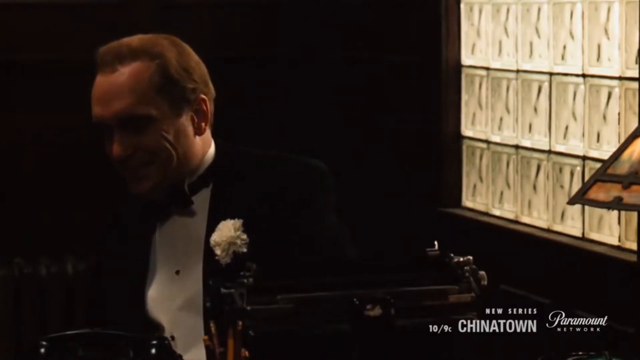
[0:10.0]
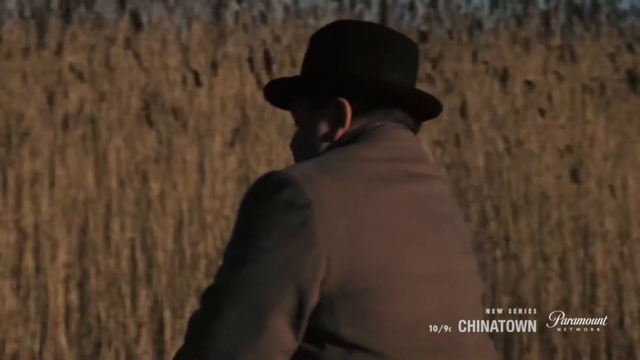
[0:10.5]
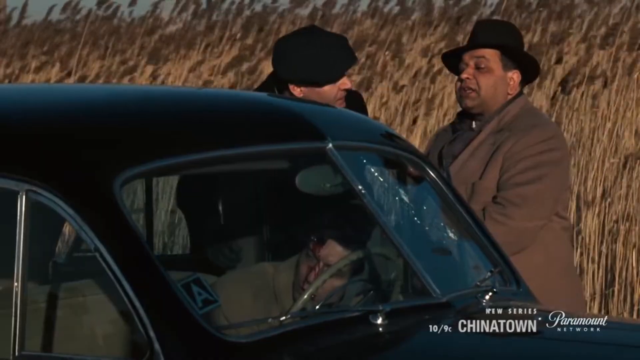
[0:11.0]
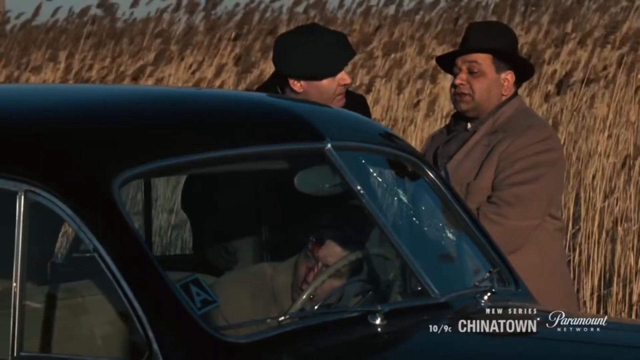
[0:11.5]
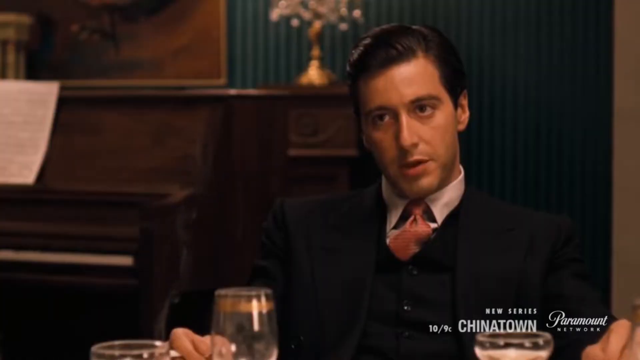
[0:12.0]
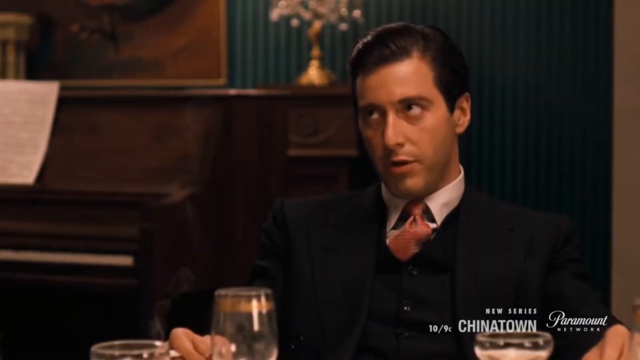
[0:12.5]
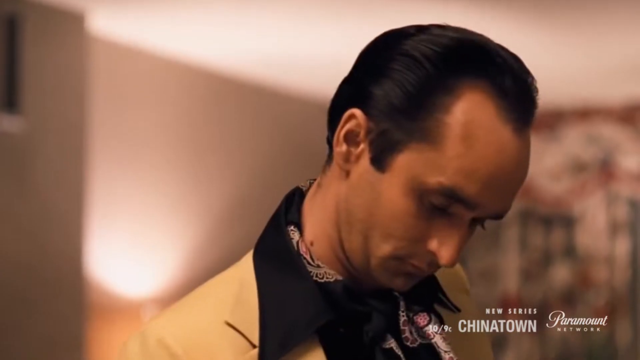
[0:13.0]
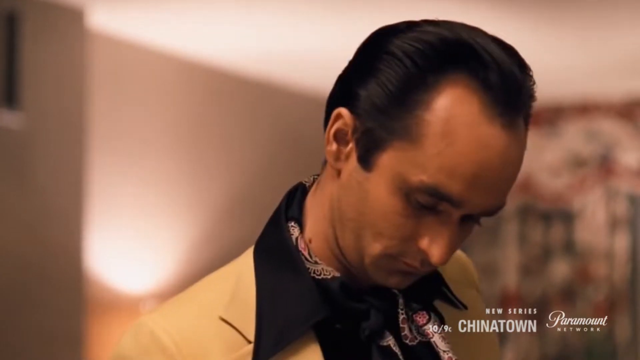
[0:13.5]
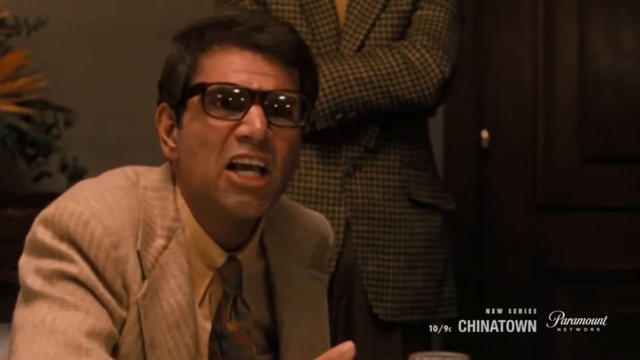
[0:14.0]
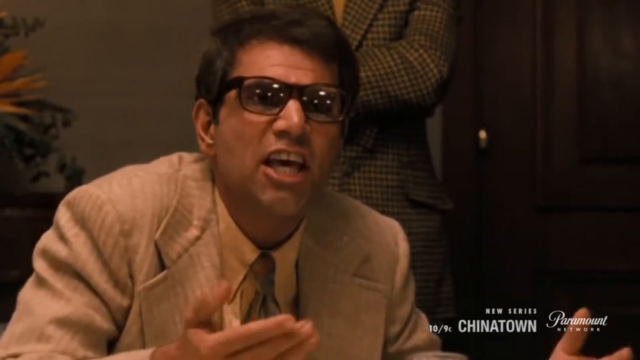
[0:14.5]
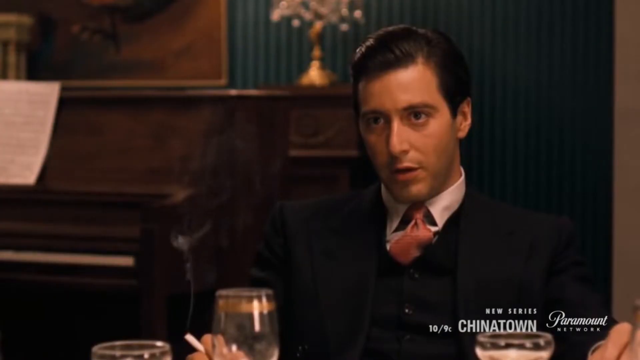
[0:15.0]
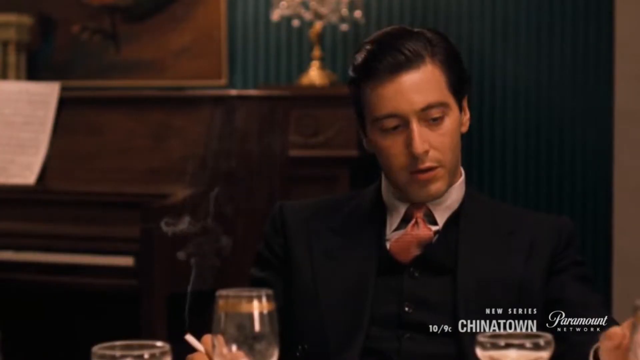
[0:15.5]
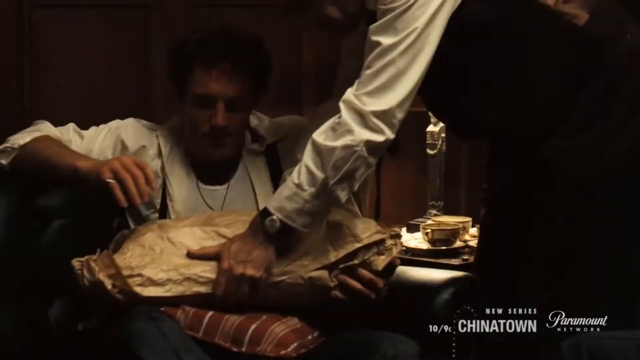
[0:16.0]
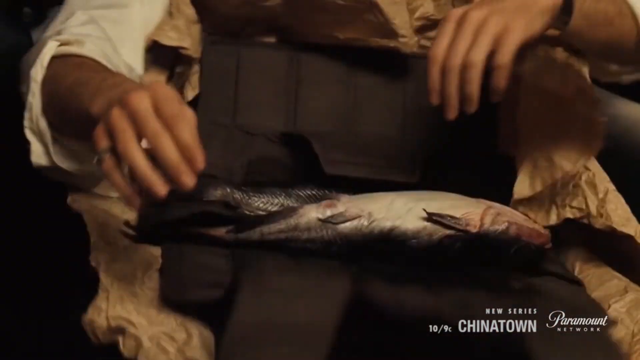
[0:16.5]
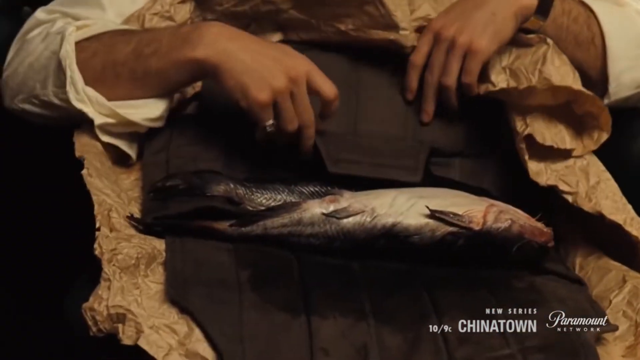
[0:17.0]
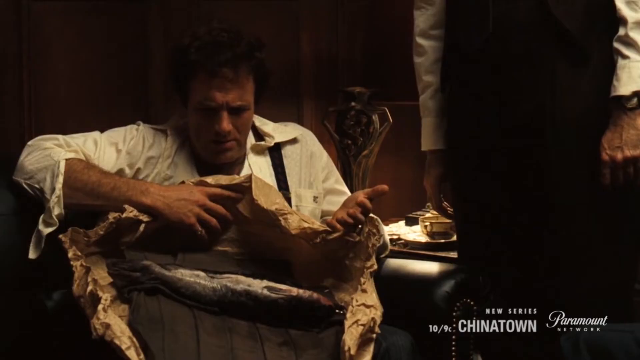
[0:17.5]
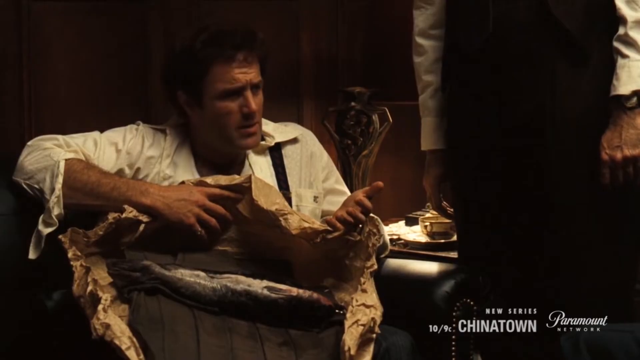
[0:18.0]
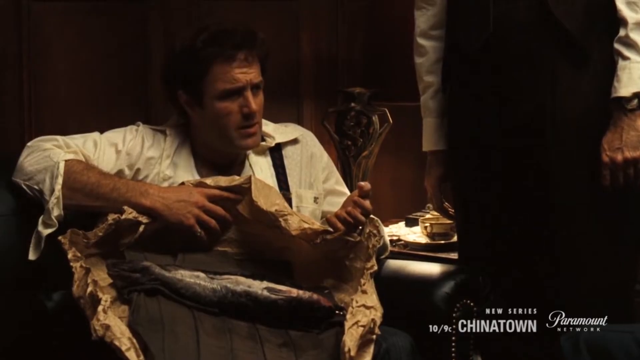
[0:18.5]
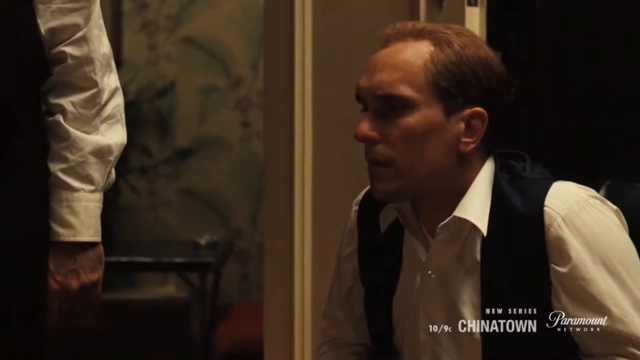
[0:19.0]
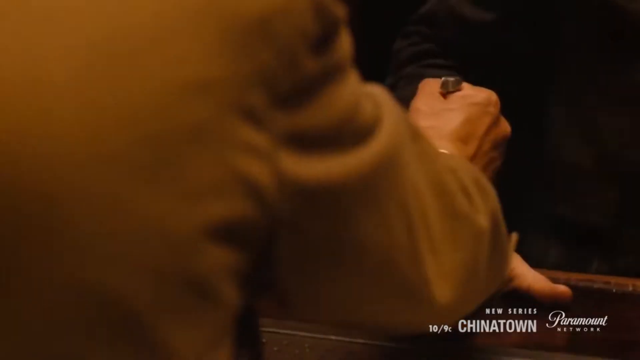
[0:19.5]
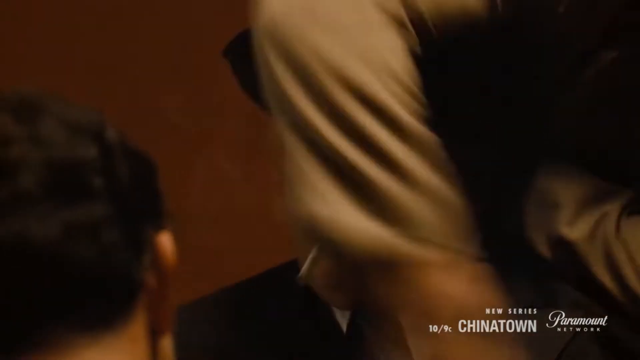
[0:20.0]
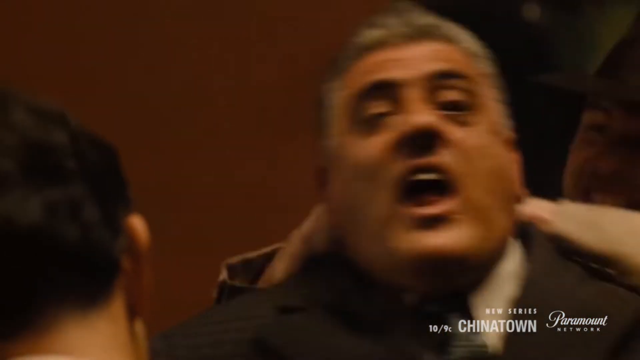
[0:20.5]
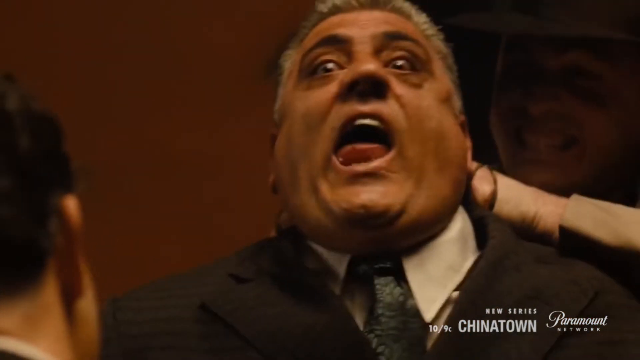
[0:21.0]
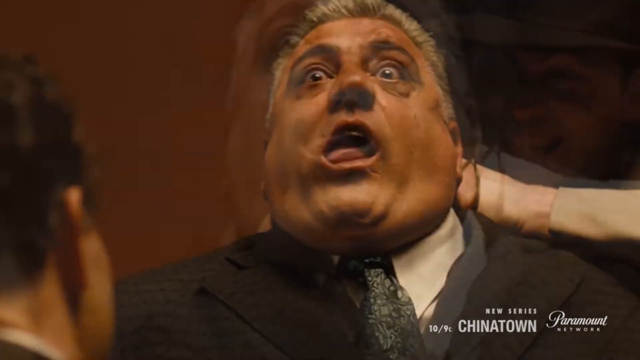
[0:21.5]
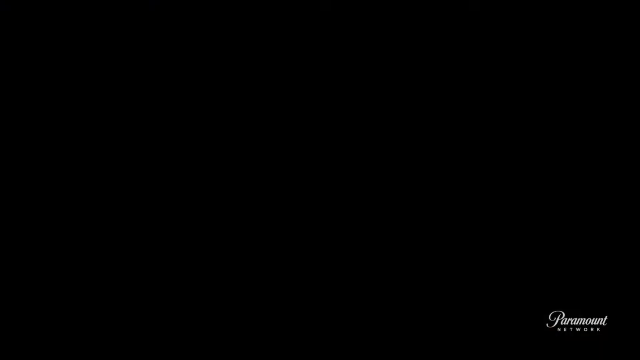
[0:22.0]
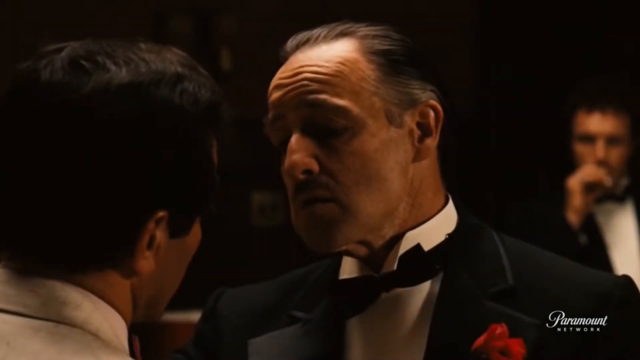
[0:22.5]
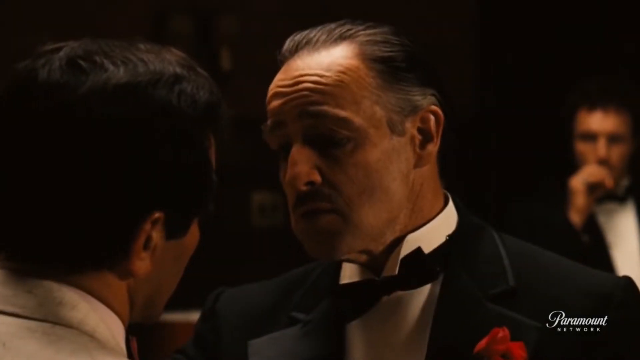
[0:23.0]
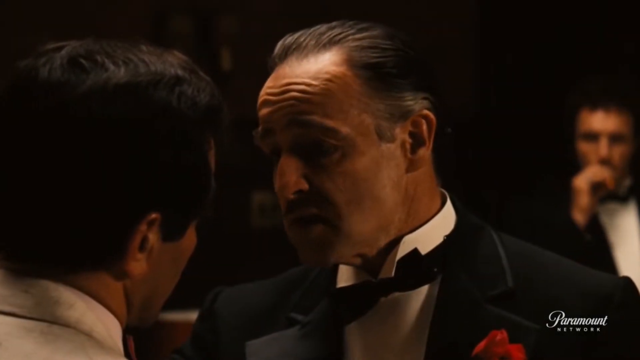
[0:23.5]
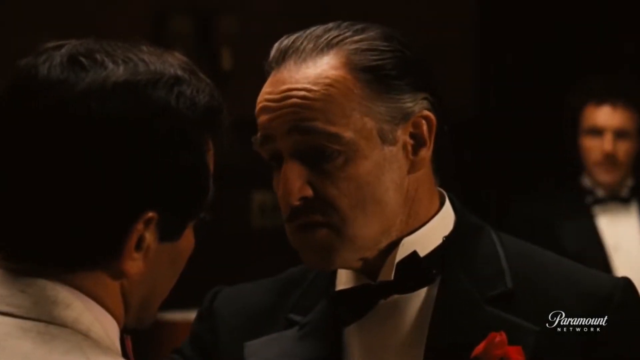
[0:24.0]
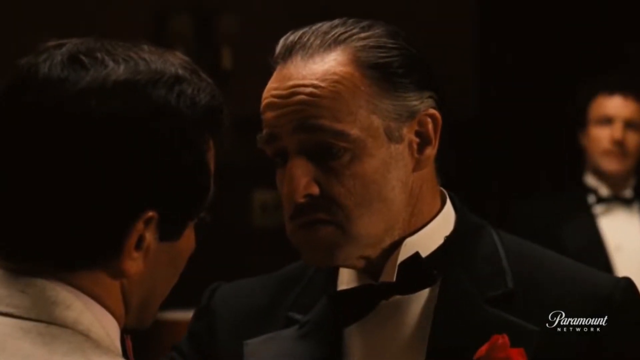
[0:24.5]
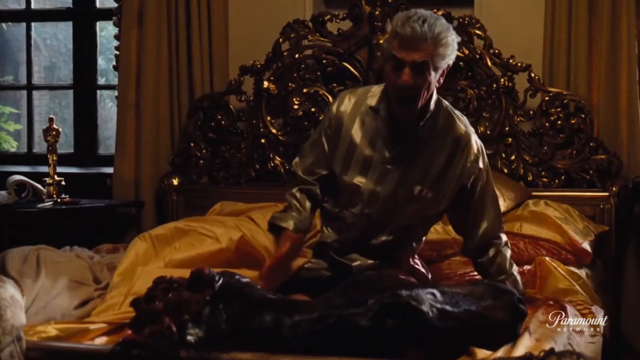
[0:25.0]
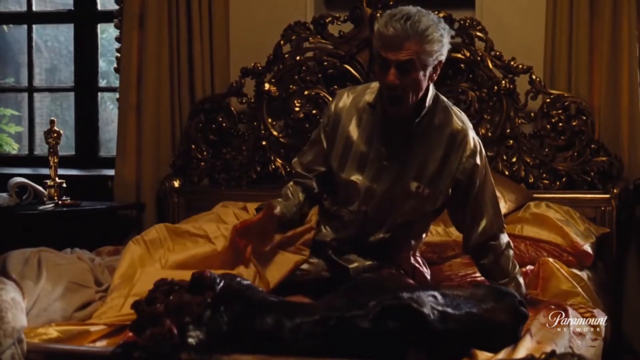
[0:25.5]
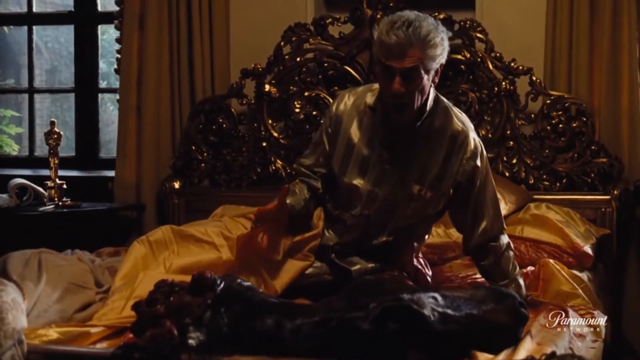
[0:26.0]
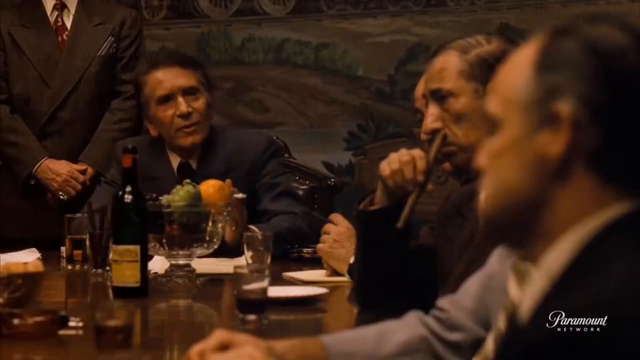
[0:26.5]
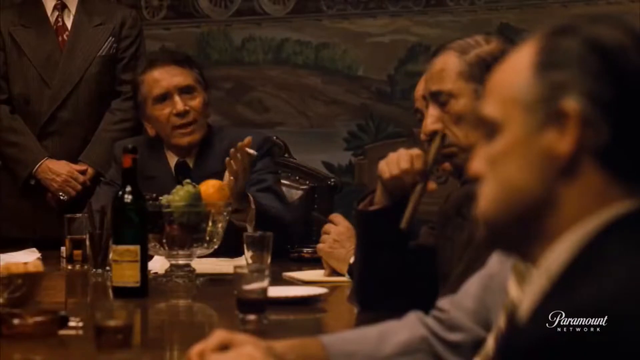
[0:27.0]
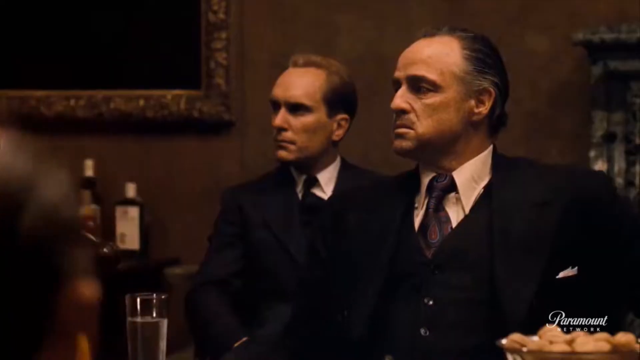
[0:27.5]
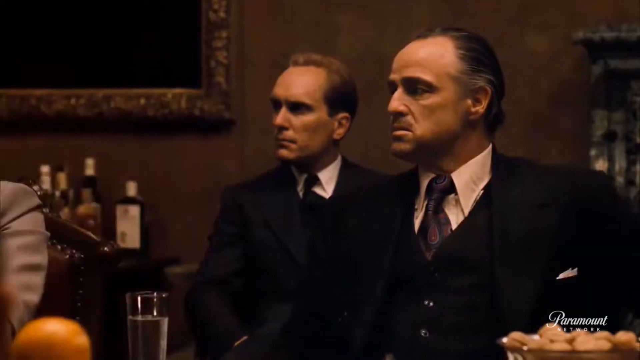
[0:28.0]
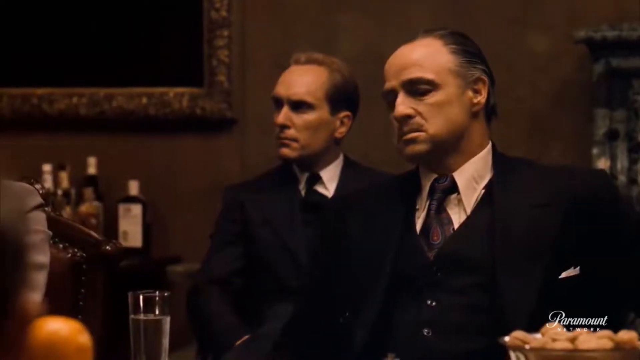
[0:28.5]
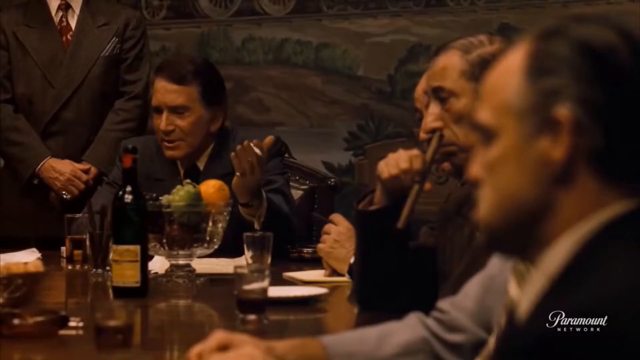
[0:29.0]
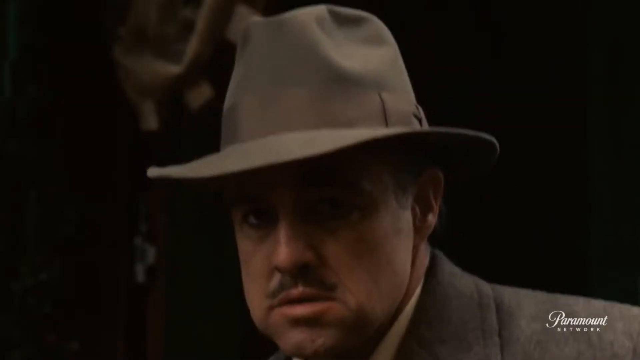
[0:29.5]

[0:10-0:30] The name "Chinatown, new series" appears at the bottom right. A man in a suit smiles inside a house, with some lit bulbs in the background. The scene moves to a field, where a man in a hat and trench coat and another man with a cape, also in a black trench coat, open the door of a person who looks like he has been shot in the head; the windscreen is cracked. In another scene a man in a suit talks, with a piano behind him and a flower on top of the piano; the man smokes and has a glass of wine. Two men converse: one, wearing glasses and a suit, looks furious as he talks to the other, who is calm. A man is given a wrapped fish, and they talk. A man is stabbed with a knife between the fingers or on the hand, and he struggles. Two men talk, a sleeping person wakes up, and two men talk while smoking cigars and cigarettes. Two men then use, shoot or point guns.